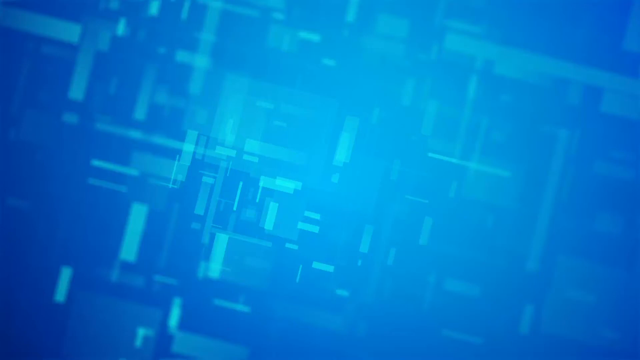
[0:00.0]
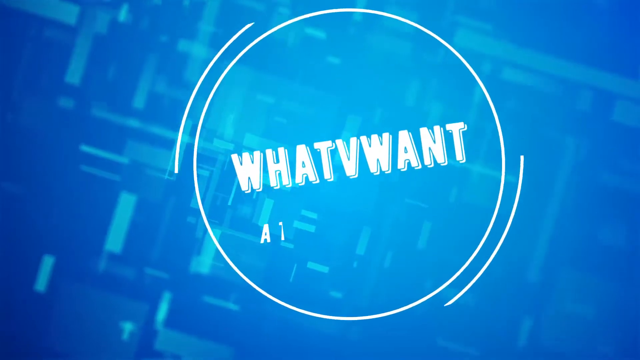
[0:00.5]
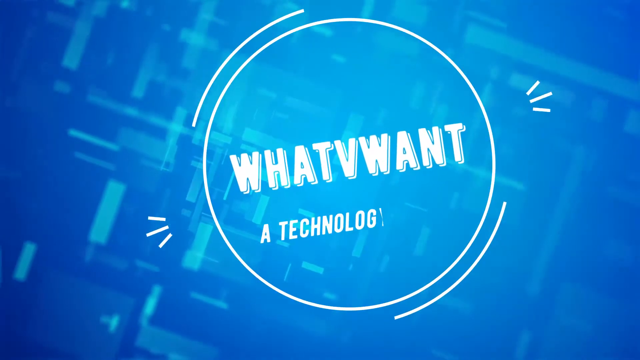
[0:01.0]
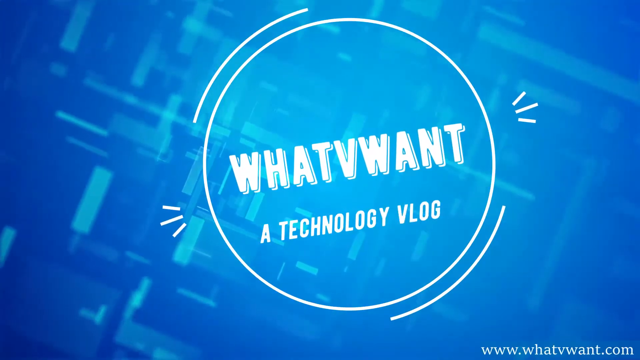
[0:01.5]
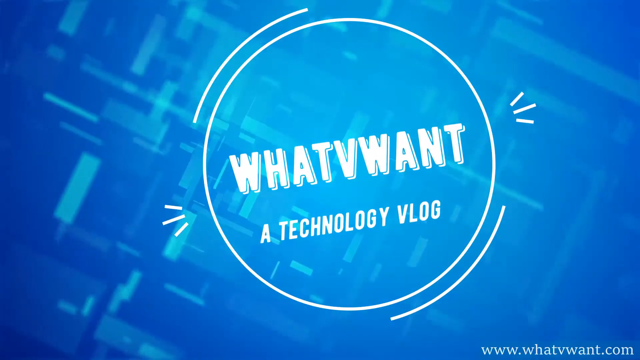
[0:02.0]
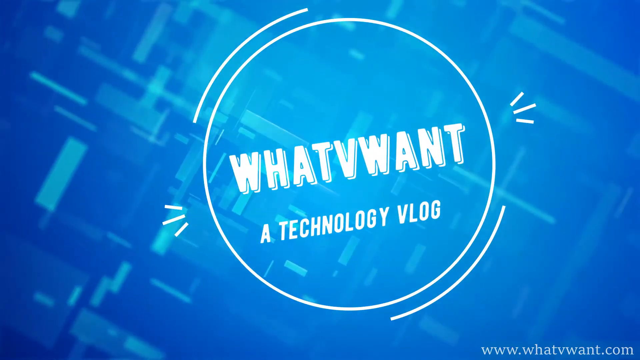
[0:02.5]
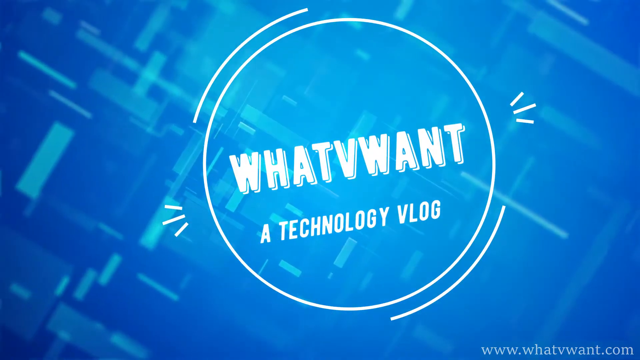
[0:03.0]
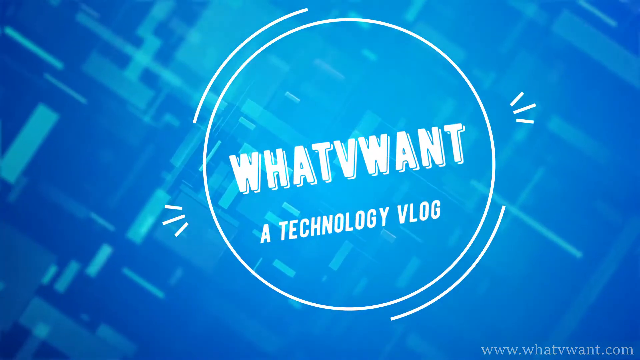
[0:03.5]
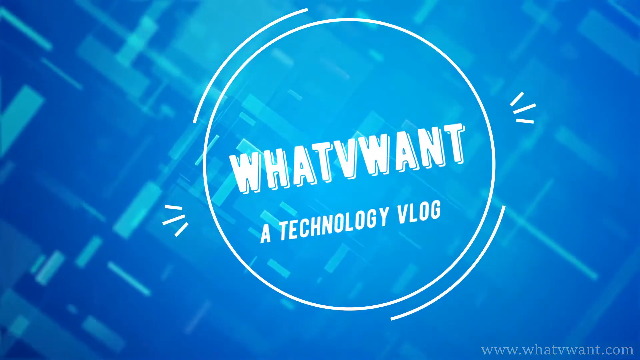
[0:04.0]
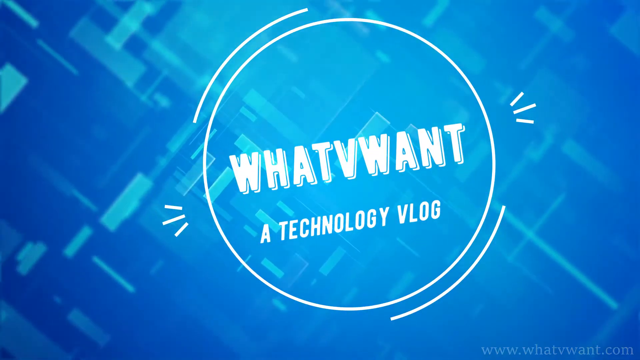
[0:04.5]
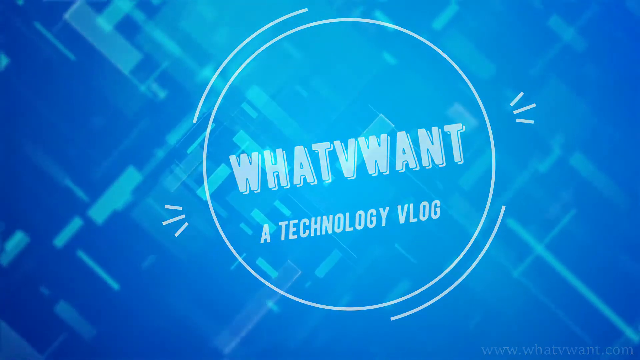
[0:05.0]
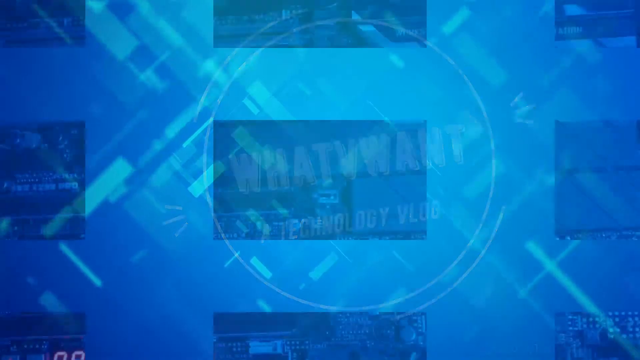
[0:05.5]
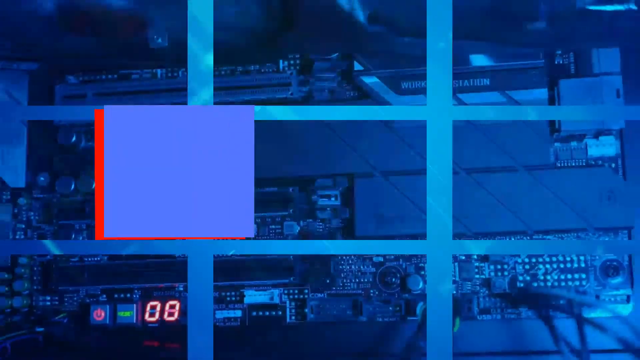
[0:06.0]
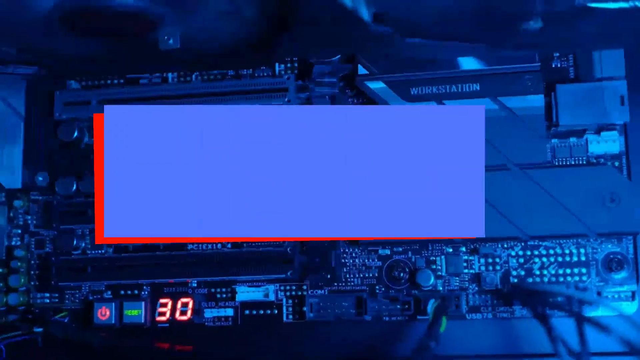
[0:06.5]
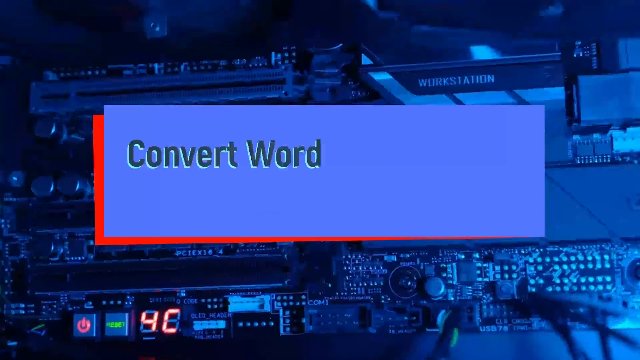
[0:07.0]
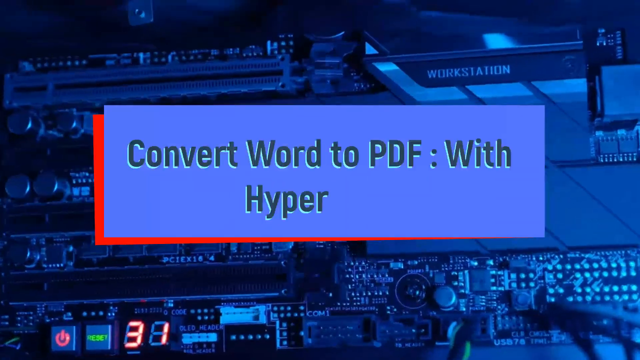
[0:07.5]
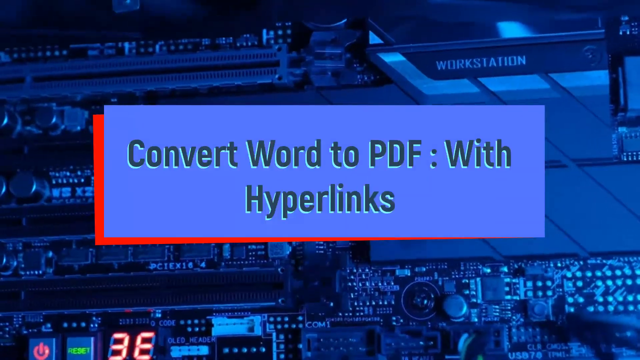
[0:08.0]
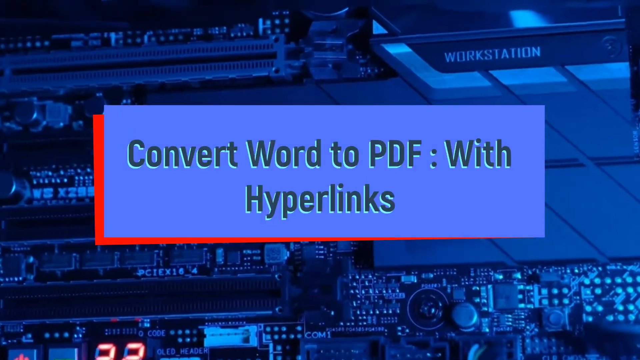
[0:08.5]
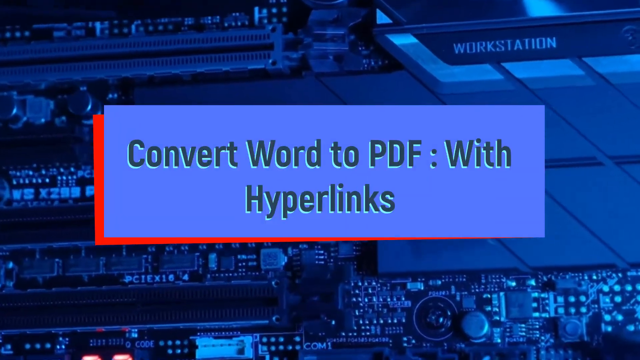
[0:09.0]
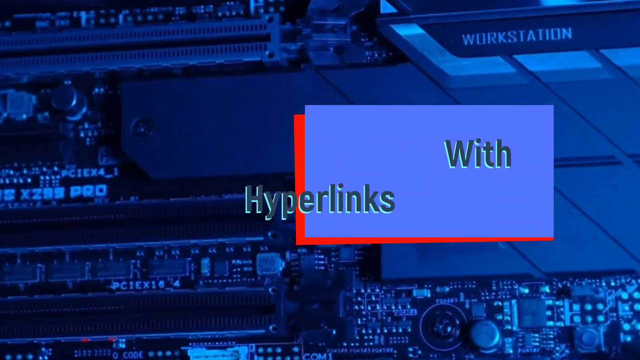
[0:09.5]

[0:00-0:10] The video is a how-to video. It opens with white text reading "what we want", spelled W-H-A-T-V-W-A-N-T, and underneath it "a technology VLOG", with a circle outline around it forming a circle logo. The background is blue and rotating, with small rectangles. A transition leads to a new screen reading "convert Word to PDF" followed by a colon and "with hyperlinks", in dark text on a blue rectangle with a red drop shadow. Behind it is an image of a workstation, showing a motherboard. The background zooms in and the rectangle disappears, and the video transitions to a desktop.